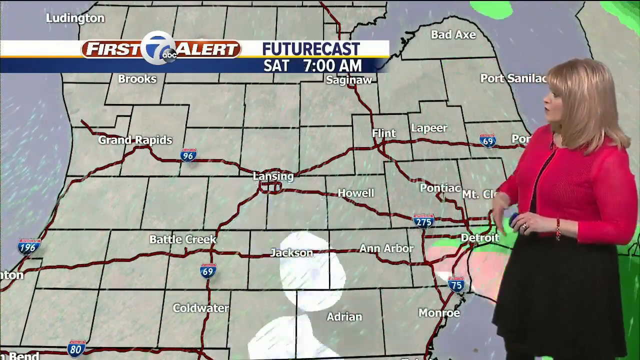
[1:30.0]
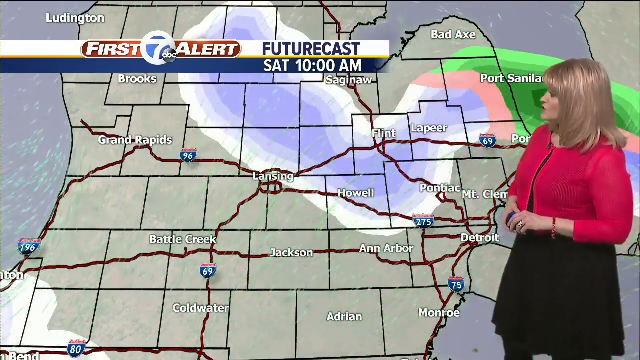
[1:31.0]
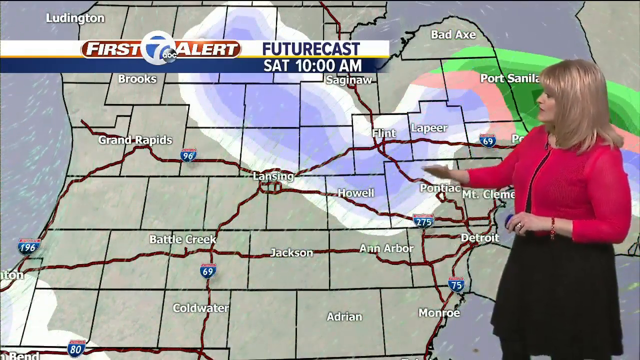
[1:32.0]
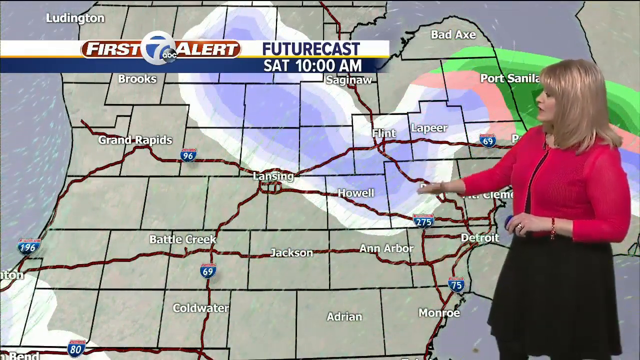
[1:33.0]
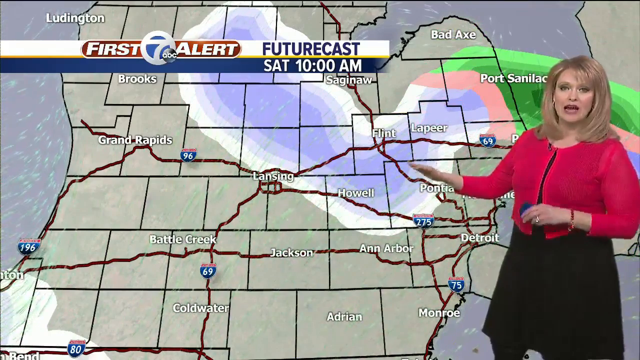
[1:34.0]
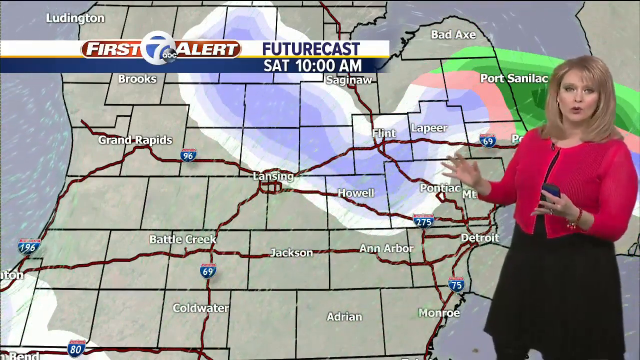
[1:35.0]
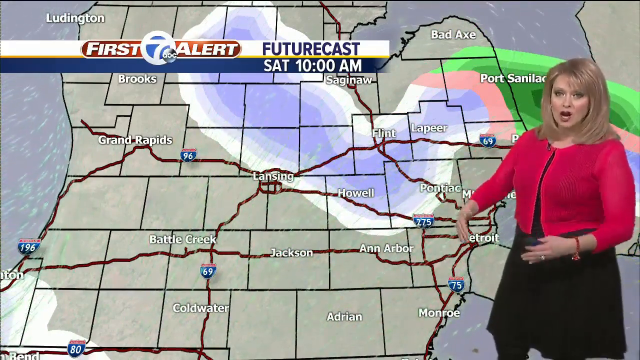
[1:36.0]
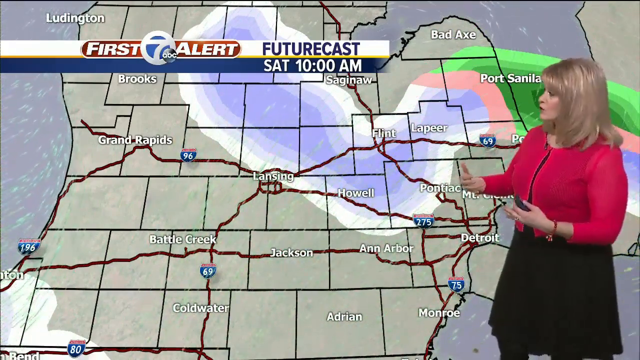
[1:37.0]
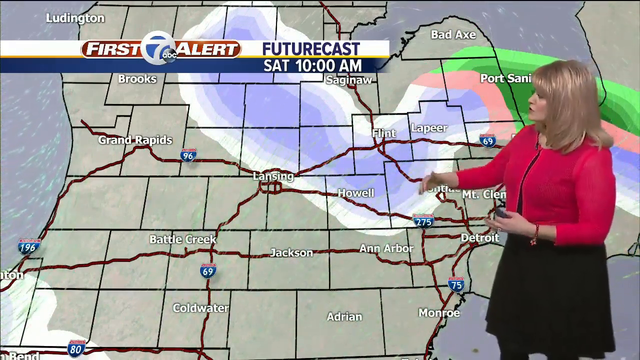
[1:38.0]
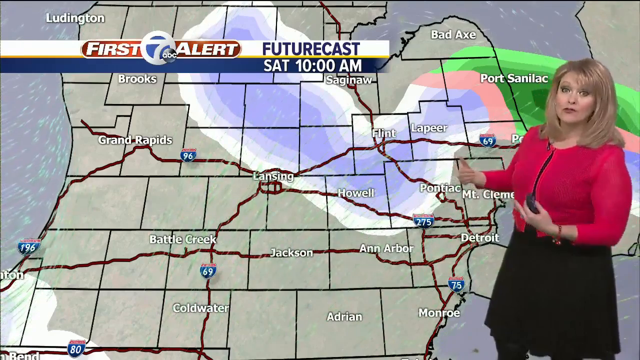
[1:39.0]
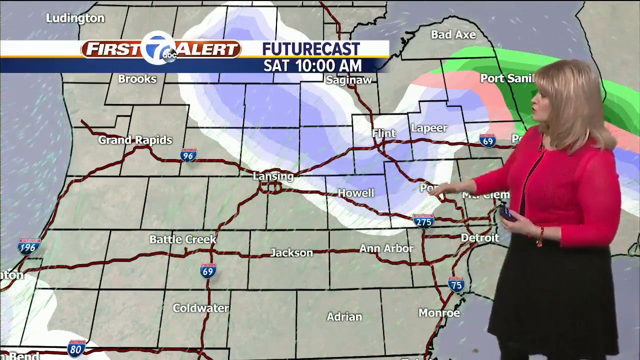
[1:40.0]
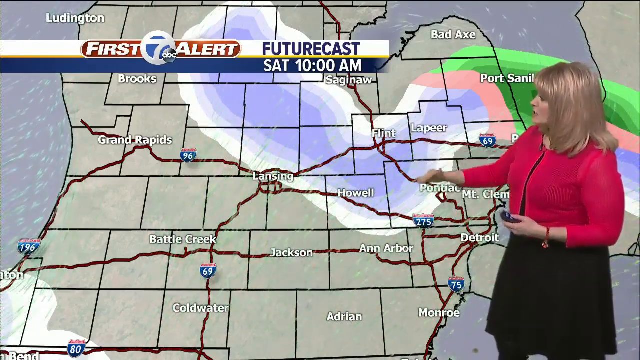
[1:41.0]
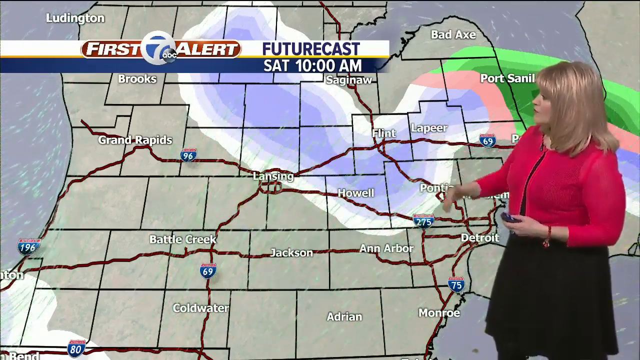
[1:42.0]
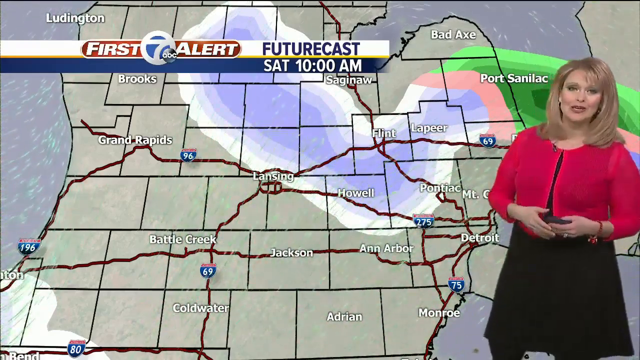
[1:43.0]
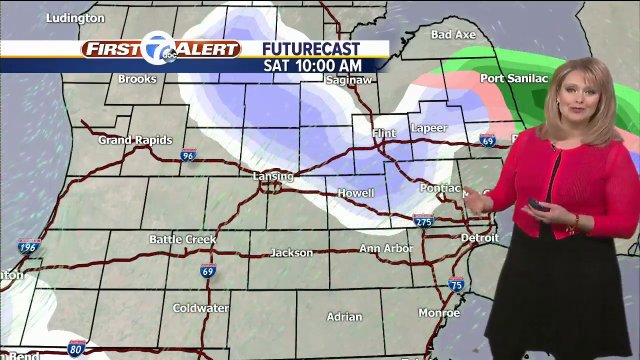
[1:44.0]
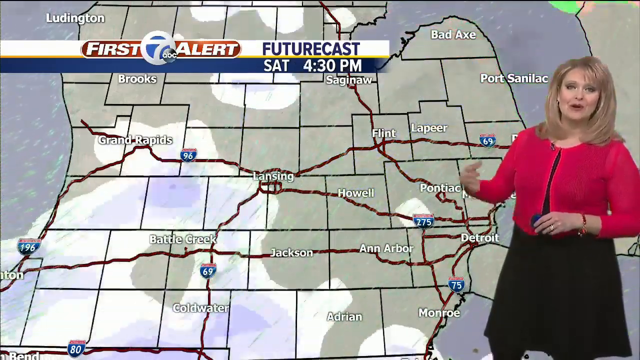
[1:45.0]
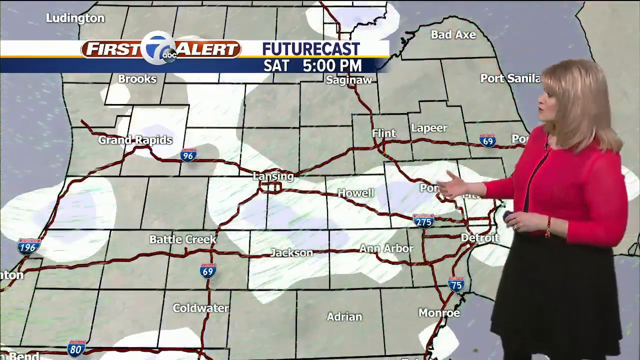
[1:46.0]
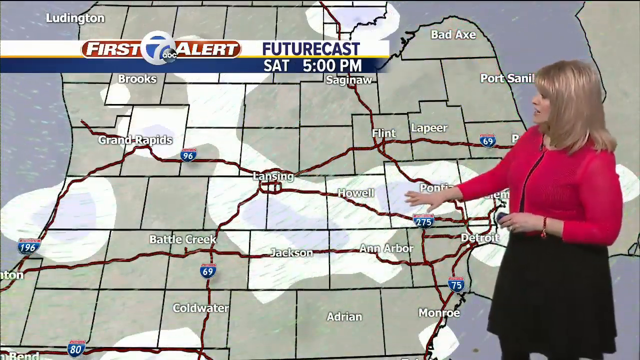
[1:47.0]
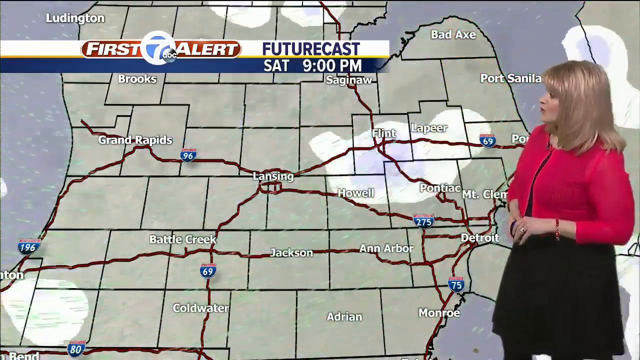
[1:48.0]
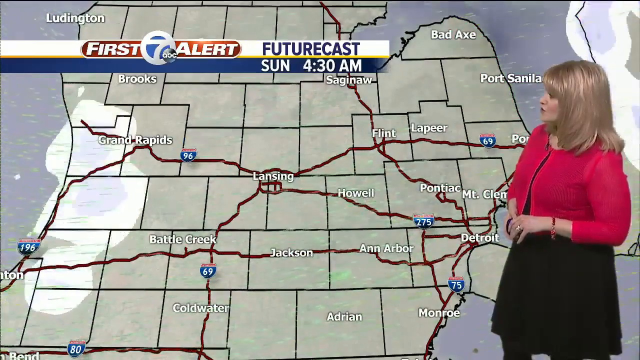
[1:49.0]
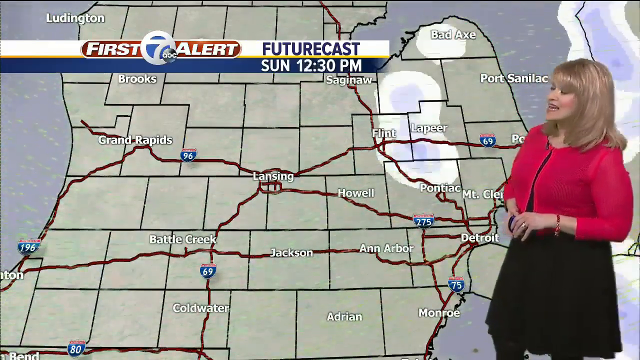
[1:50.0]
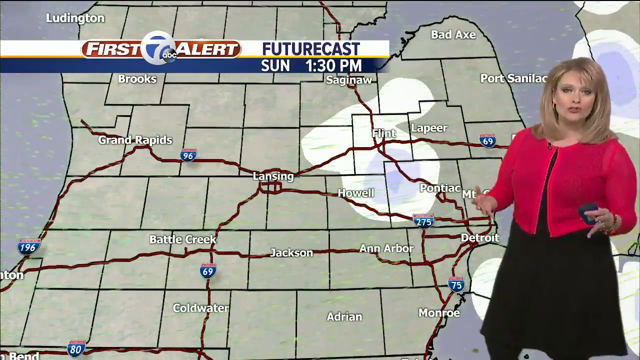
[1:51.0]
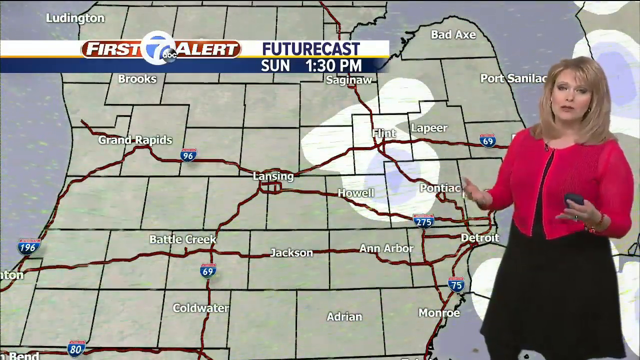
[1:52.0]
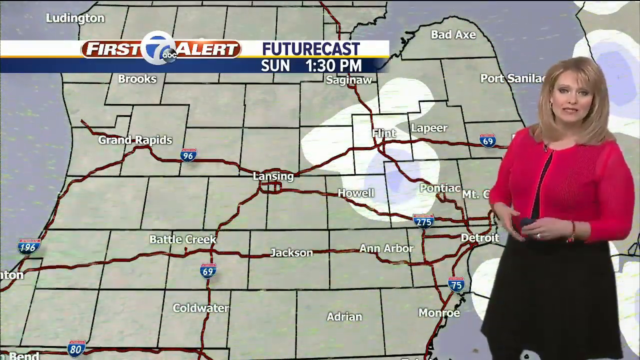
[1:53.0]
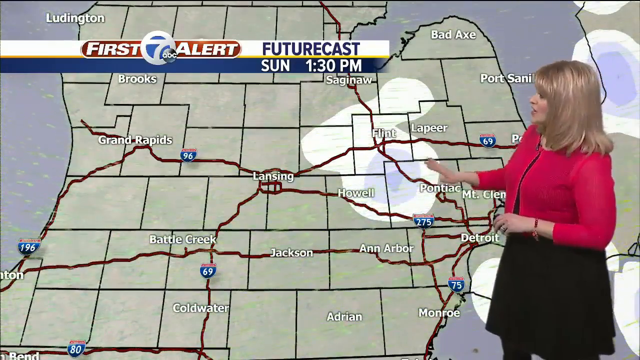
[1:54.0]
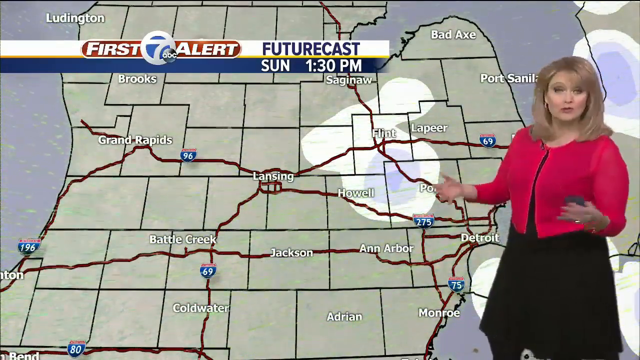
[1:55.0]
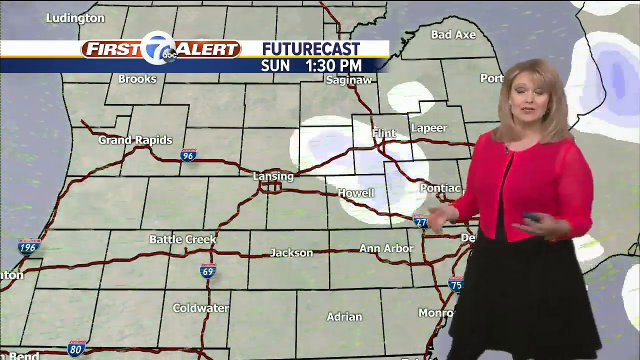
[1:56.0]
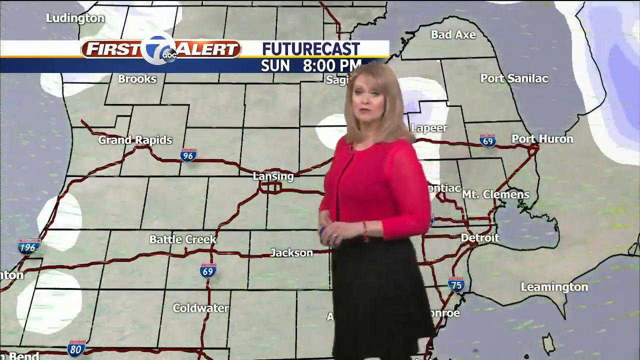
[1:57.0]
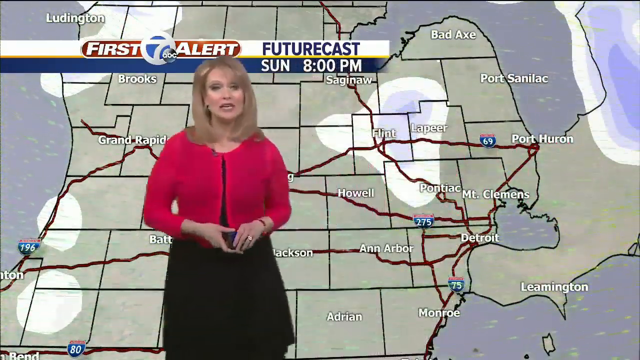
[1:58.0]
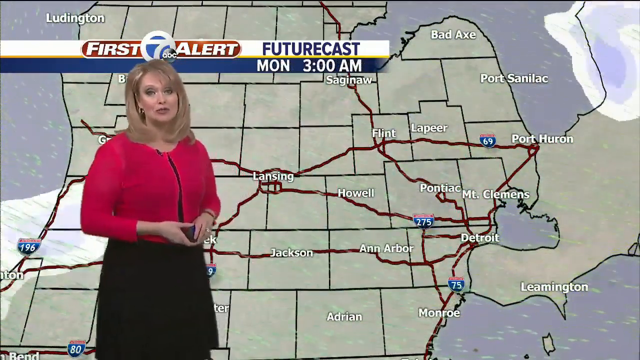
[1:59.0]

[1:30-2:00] A futurecast shows what is expected for areas around Michigan, including Lansing, Howell, Jackson, Ann Arbor, Adrian, Coldwater, Battle Creek, Grand Rapids, Brooks, Saginaw, Flint, Lapeer, Detroit and Monroe. It shows different cloud formations and weather changes in the area, possibly snow, sleet or rain.